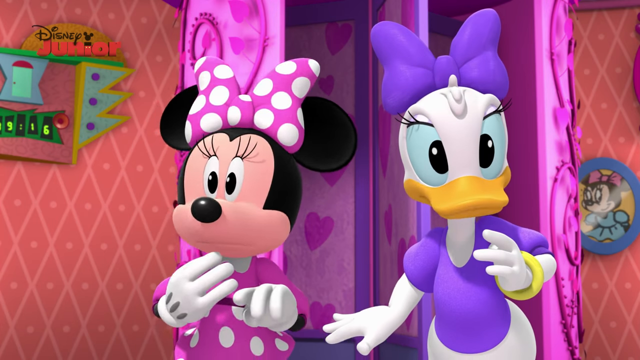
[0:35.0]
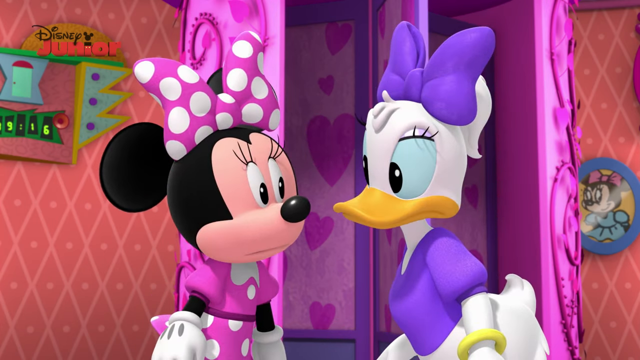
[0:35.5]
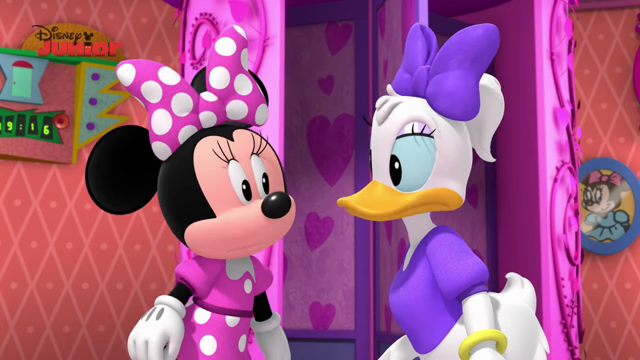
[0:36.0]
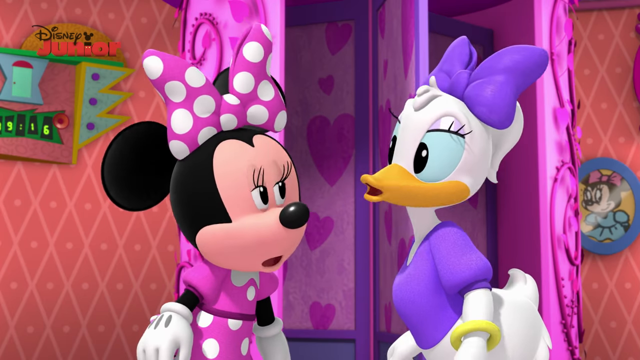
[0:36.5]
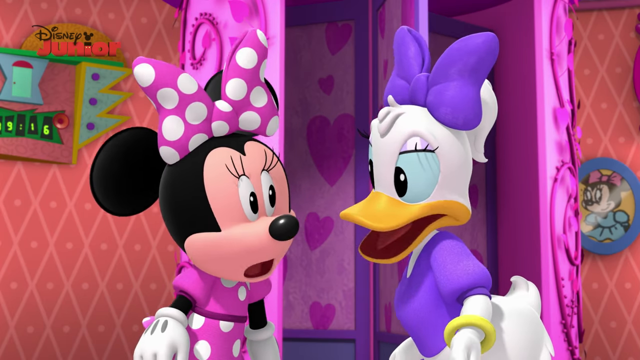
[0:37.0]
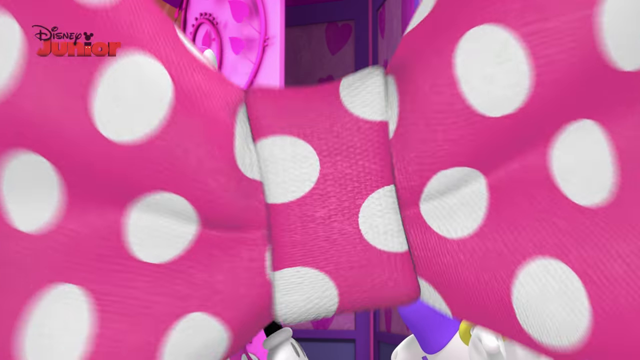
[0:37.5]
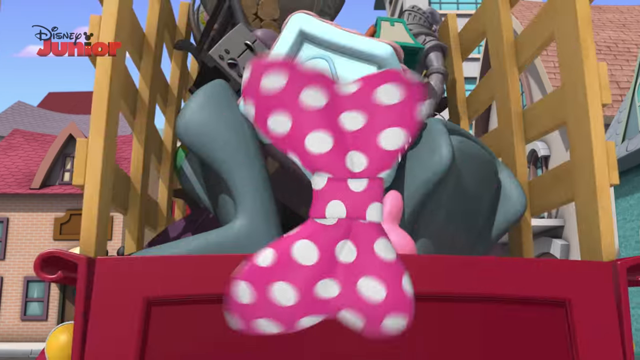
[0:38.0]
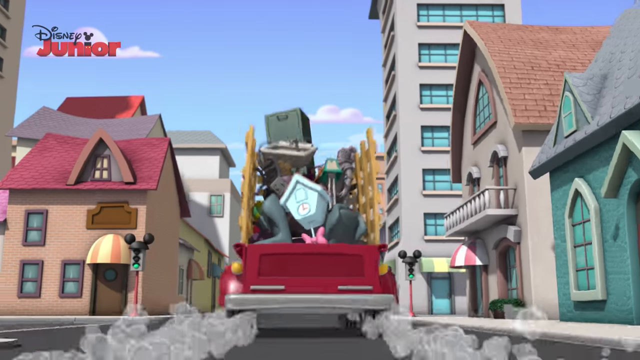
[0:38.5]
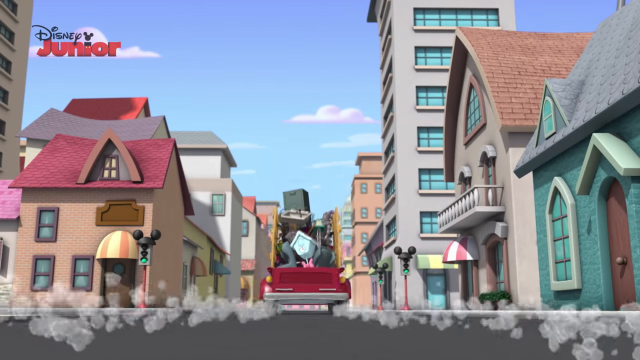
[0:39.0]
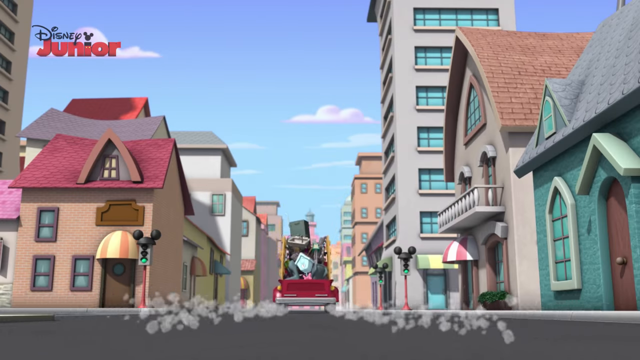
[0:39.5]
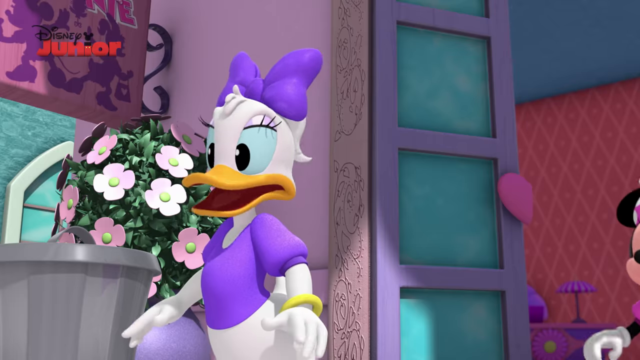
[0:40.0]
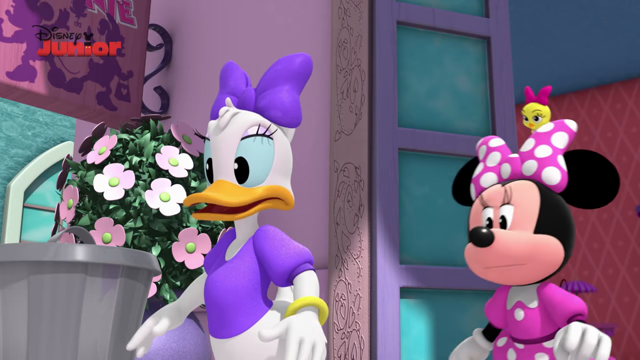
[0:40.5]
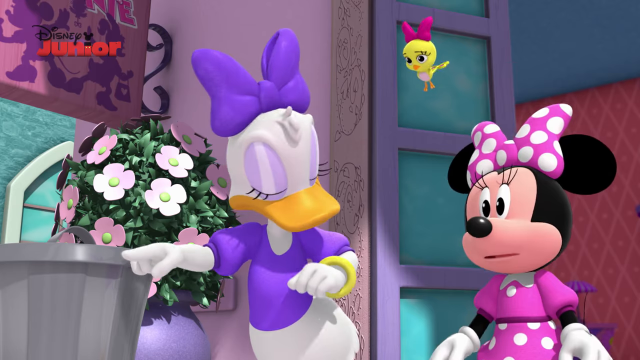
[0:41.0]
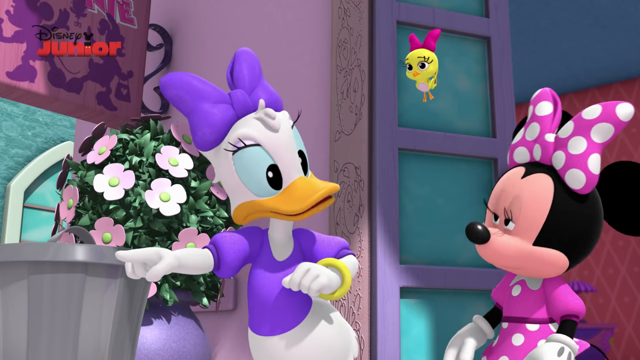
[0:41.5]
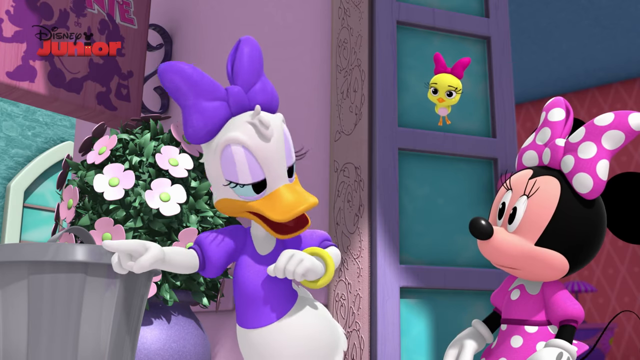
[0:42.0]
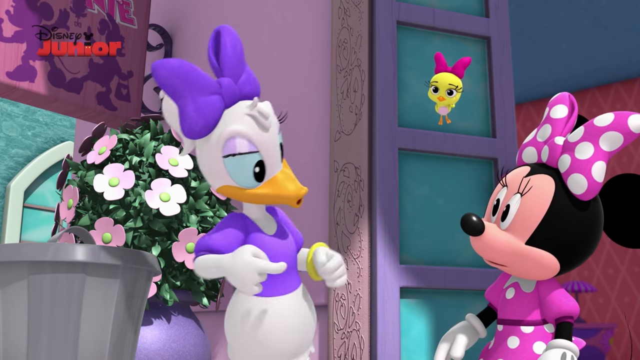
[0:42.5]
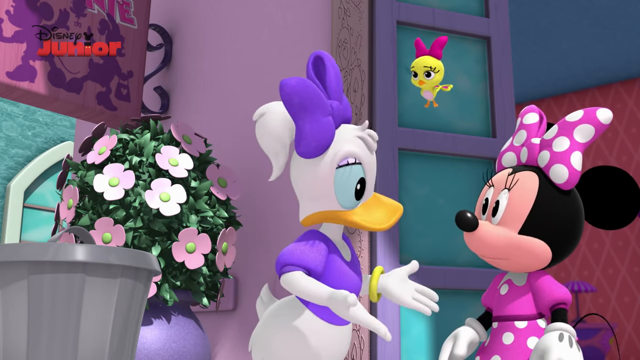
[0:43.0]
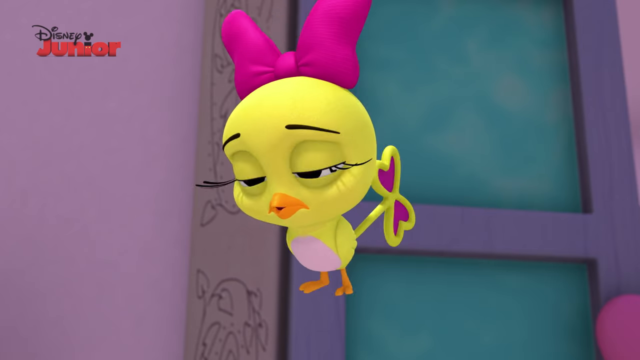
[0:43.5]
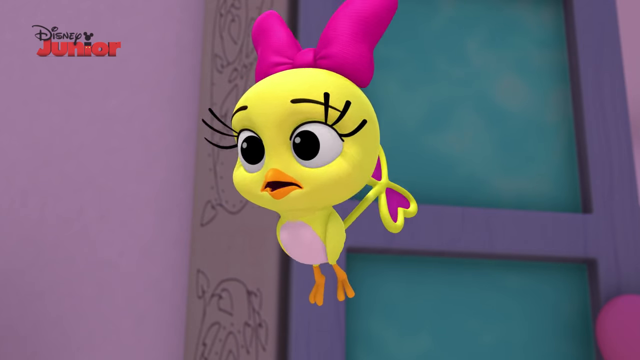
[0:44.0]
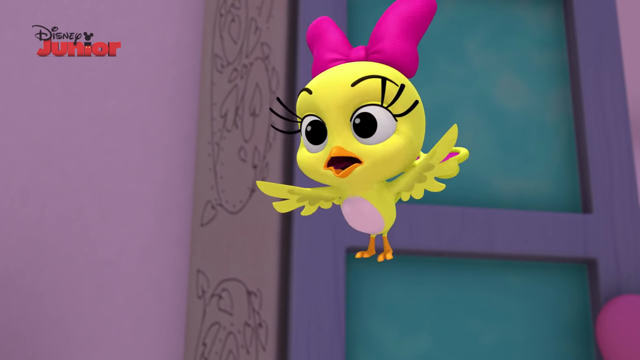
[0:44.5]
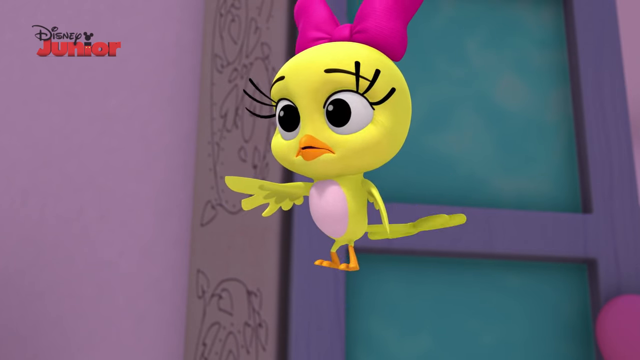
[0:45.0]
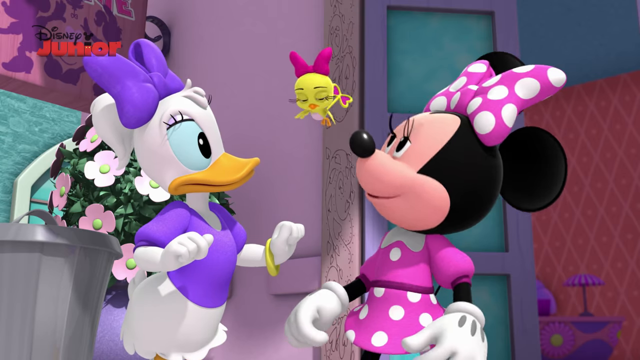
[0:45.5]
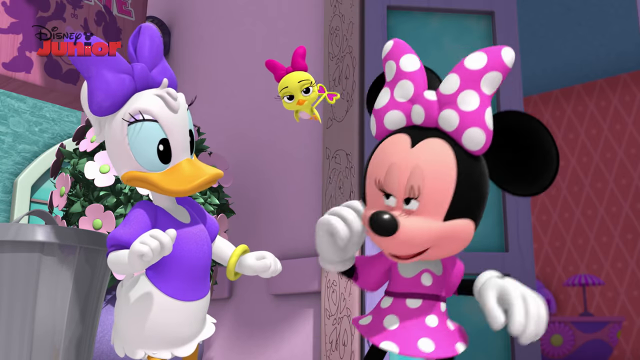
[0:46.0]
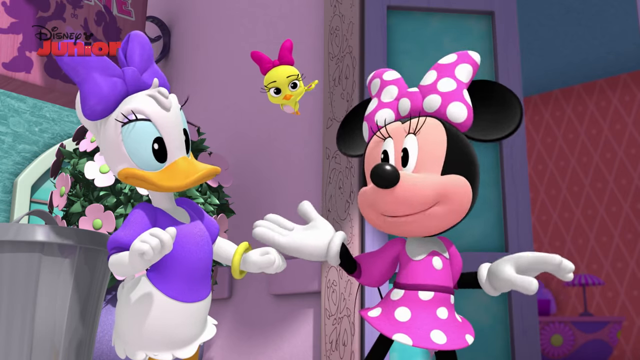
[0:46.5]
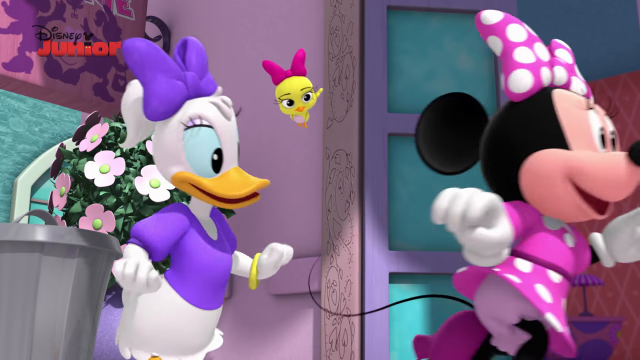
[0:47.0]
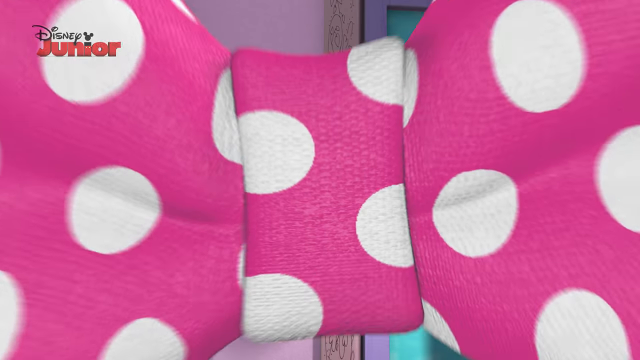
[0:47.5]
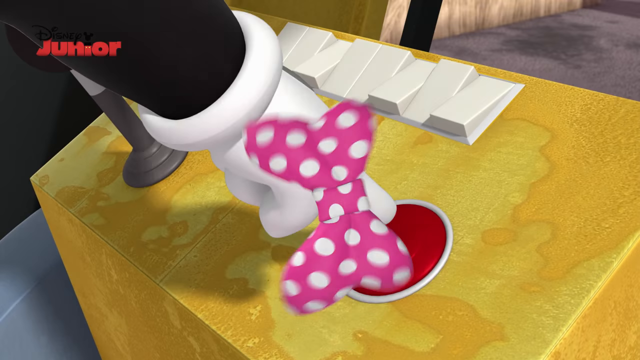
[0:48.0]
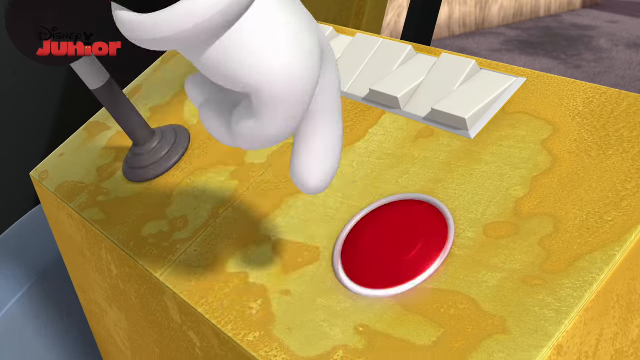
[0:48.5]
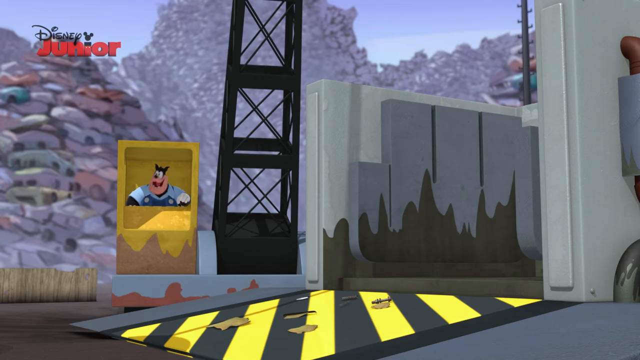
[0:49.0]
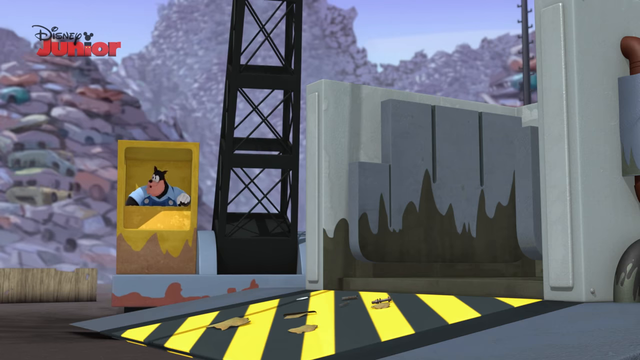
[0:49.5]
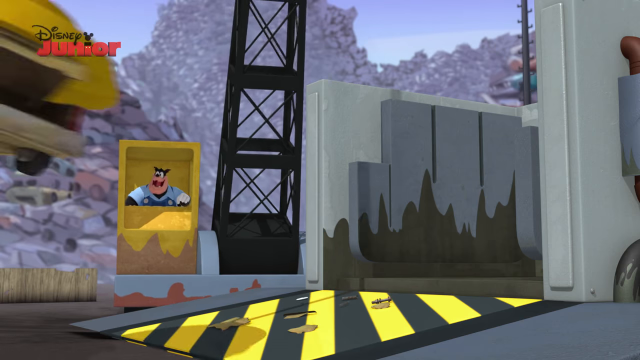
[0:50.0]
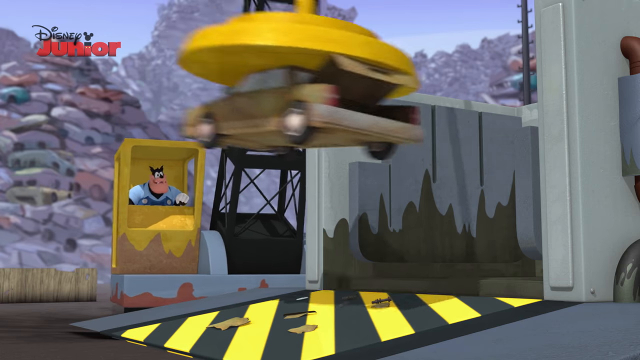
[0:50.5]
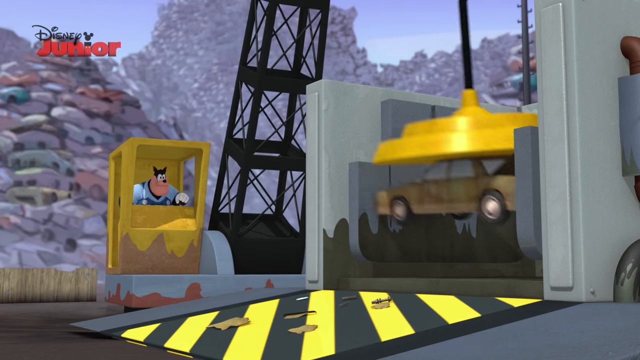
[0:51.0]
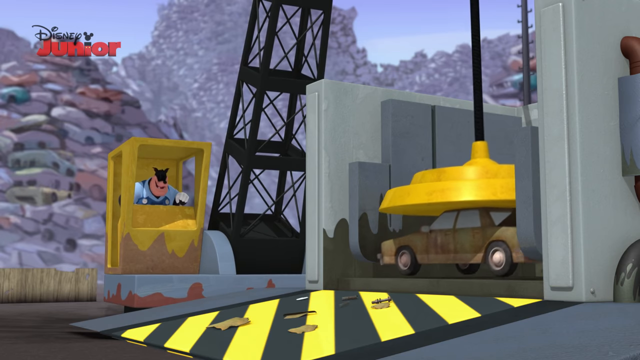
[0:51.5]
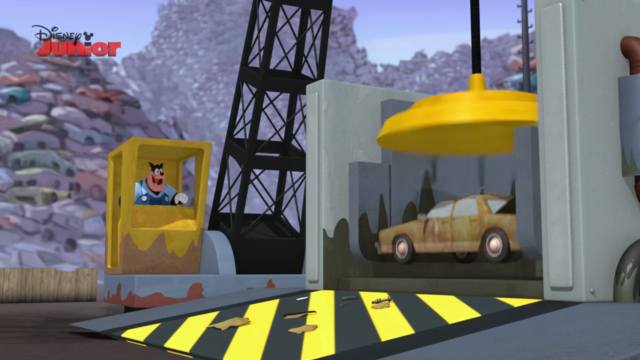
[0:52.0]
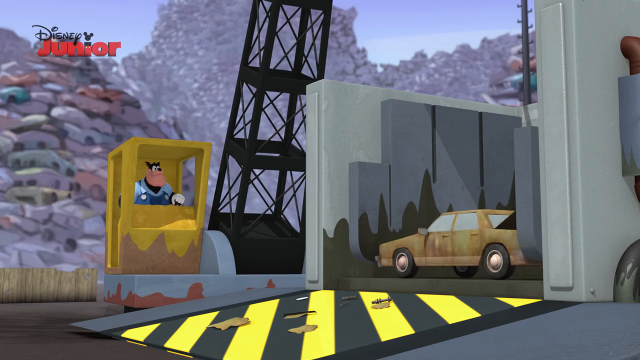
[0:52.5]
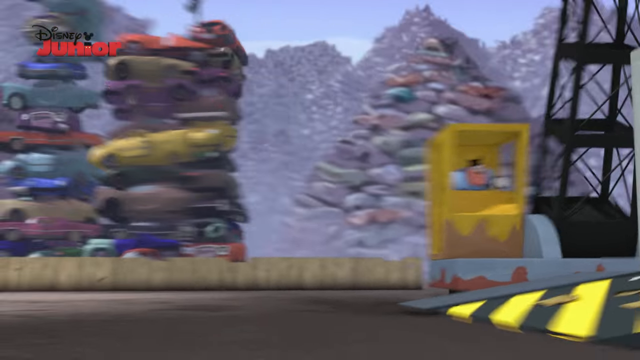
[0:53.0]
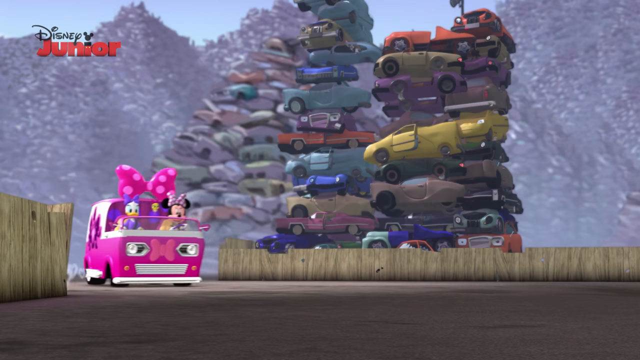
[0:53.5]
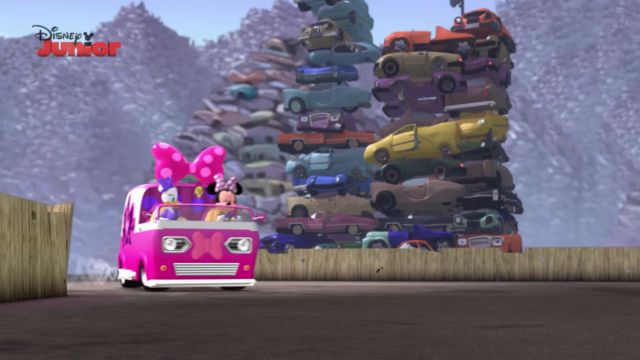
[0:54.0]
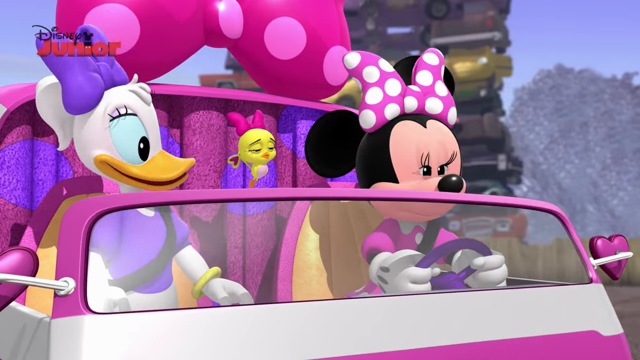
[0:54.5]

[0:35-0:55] Minnie and Daisy look directly at the camera, both seeming very surprised. They turn to face each other and talk simultaneously, both saying several things at the same time. A spinning pink dotted bow transition follows. Next, the original pale blue cuckoo clock is driven away on the back of what looks like a trash wagon: a red pickup truck with wooden walls on each side of the bed. The blue cuckoo clock is dead center in the bed of the truck, which moves away from the camera down the street. Daisy stands next to the trash can where the cuckoo clock was placed for disposal, and Minnie and the yellow cuckoo bird come running up. Daisy points down the road and talks to them, probably explaining that the clock has been taken away. The yellow cuckoo bird looks quite upset. Minnie looks hopeful and gives a follow-me gesture, and all three run off the screen to the right. After another spinning bow transition, a yellow control panel with a joystick and a big red button appears, and a white-gloved hand pushes the big red button. The camera pulls out to a larger view of a junkyard with huge piles of old cars. In the center of the screen is Pete with some type of crane-like contraption; the crane, in the center, points upward, and Pete is in the yellow control box next to it on the left side. On the right side is a ginormous trash compactor. Pete manipulates the crane, which puts an old car into the trash compactor and releases it. Before the car can be compacted, the camera pans left to Minnie, Daisy and the yellow cuckoo bird arriving in Minnie's pink van, which has a very large pink polka-dotted bow on top. A close-up shows the three in the van, with Daisy talking very animatedly and pointing at something in the junkyard.